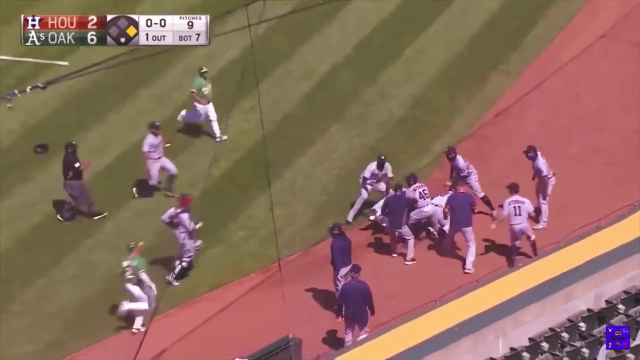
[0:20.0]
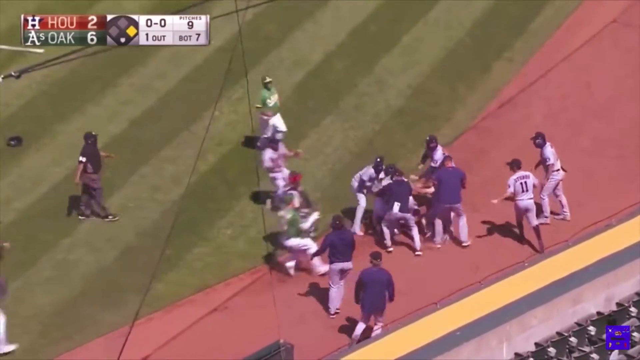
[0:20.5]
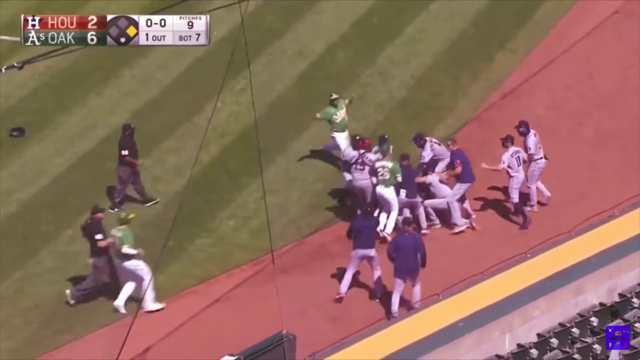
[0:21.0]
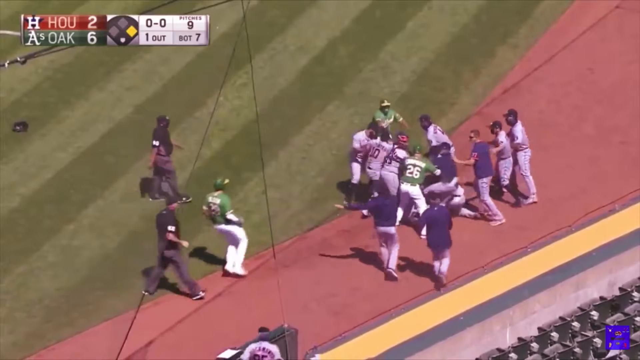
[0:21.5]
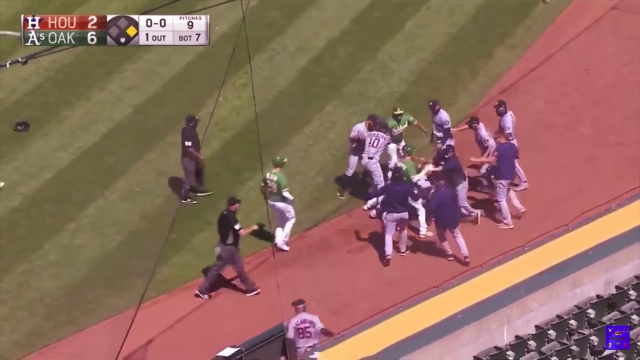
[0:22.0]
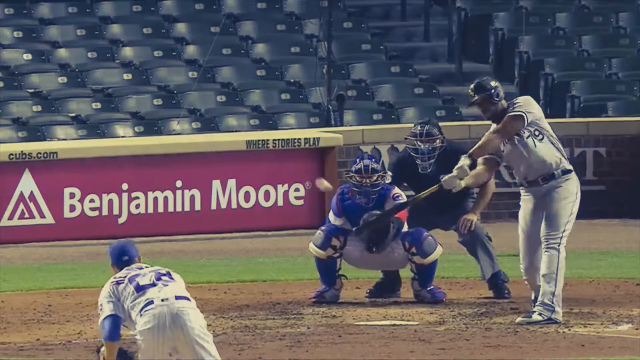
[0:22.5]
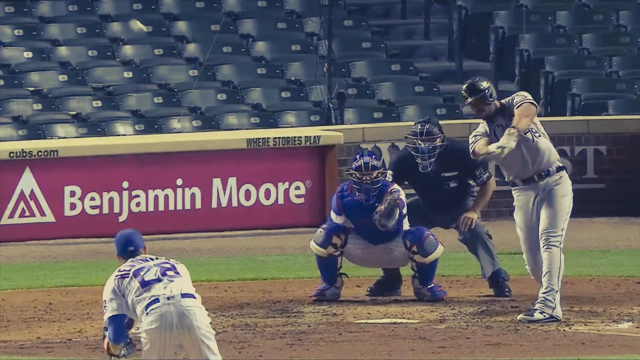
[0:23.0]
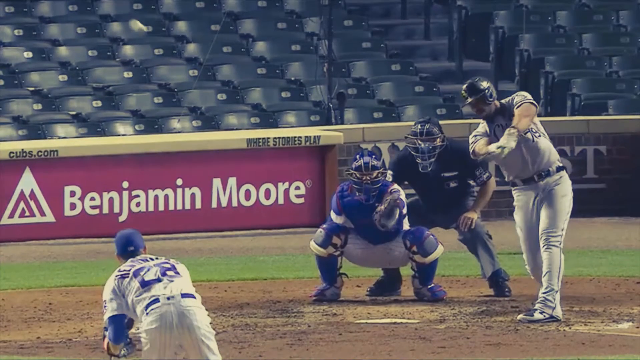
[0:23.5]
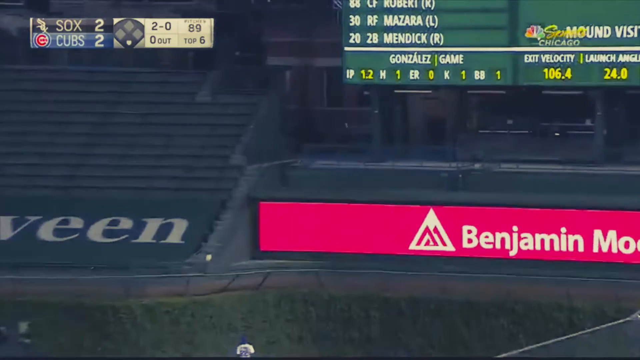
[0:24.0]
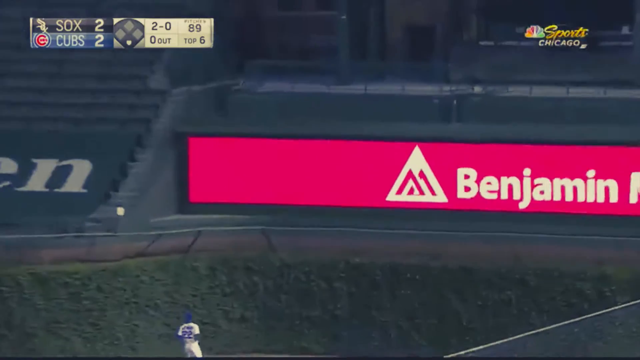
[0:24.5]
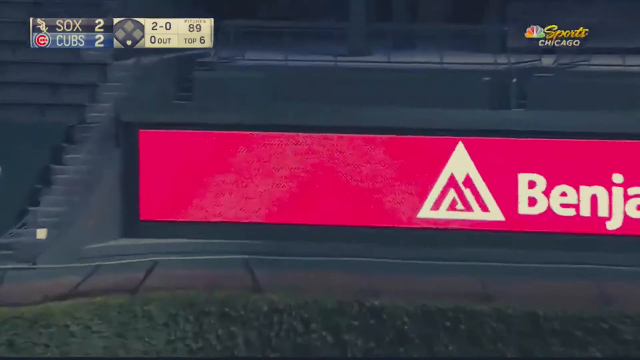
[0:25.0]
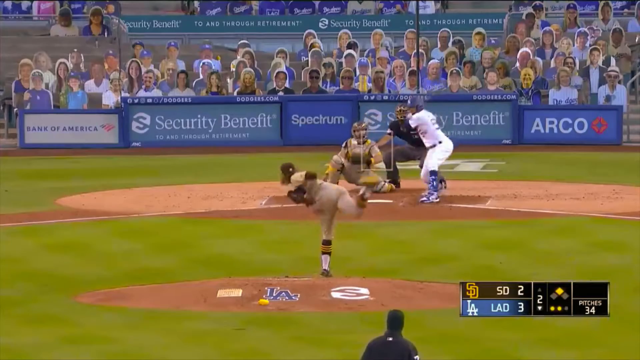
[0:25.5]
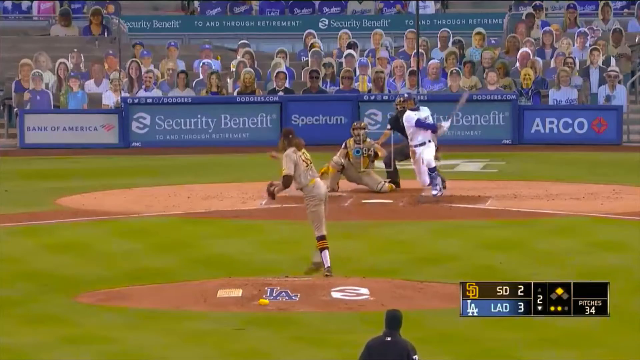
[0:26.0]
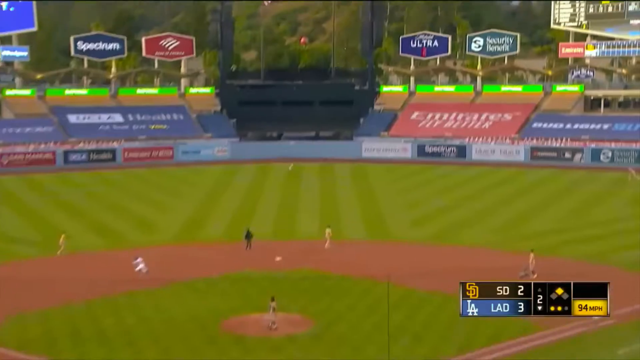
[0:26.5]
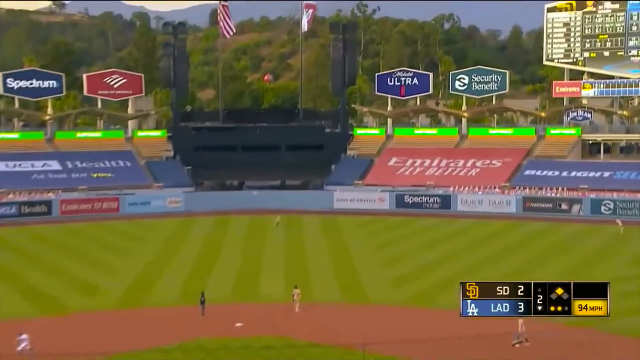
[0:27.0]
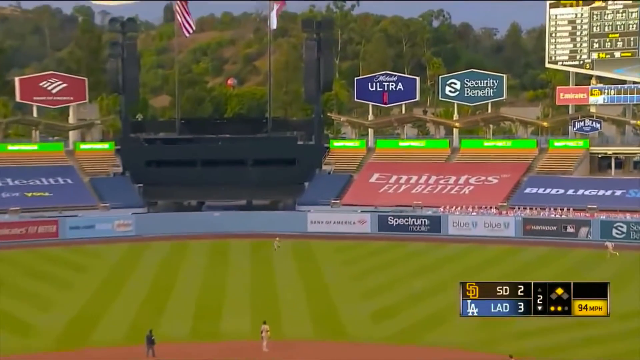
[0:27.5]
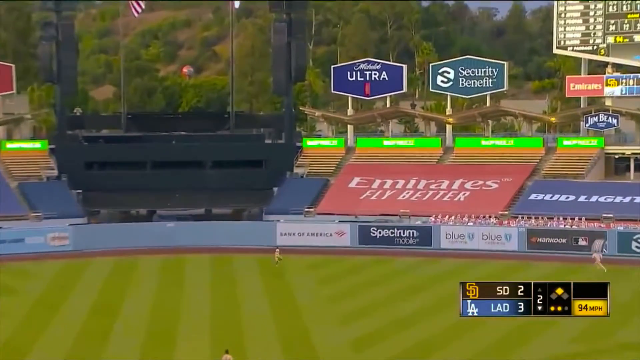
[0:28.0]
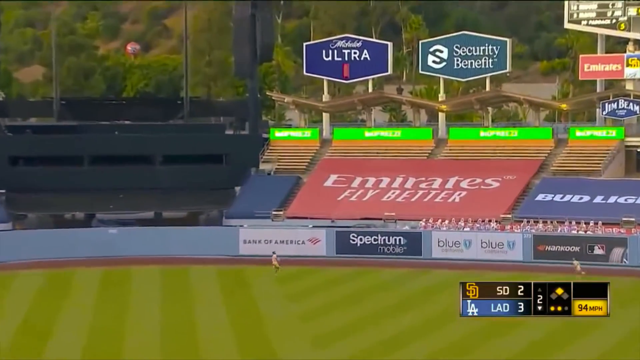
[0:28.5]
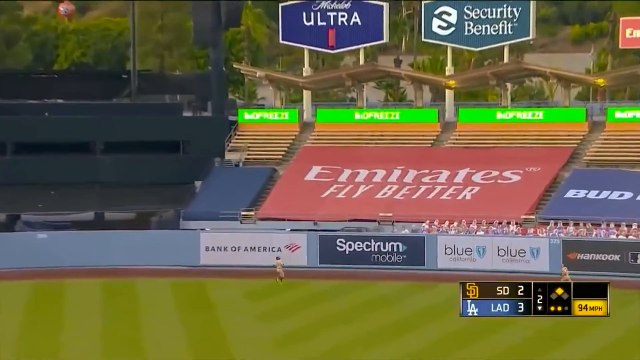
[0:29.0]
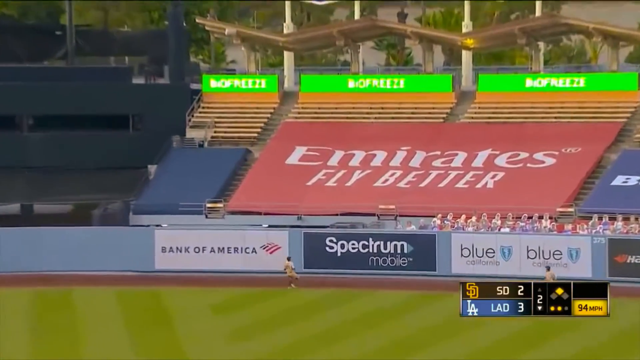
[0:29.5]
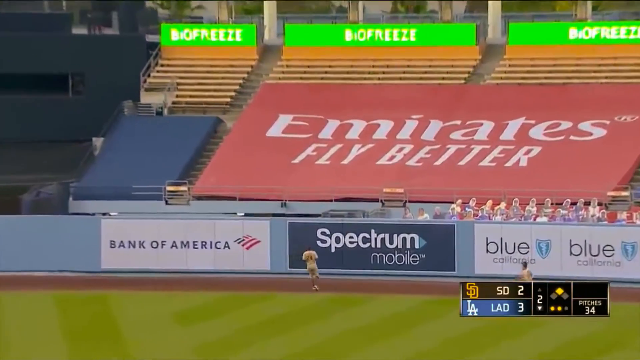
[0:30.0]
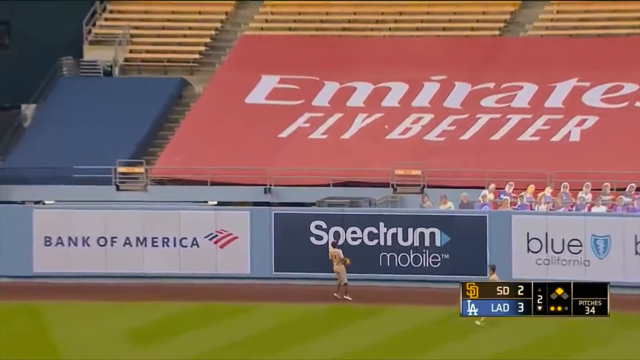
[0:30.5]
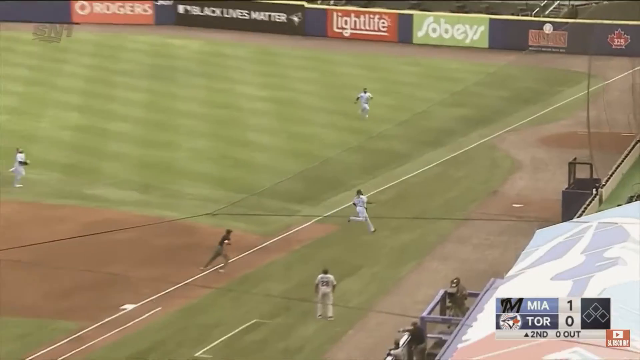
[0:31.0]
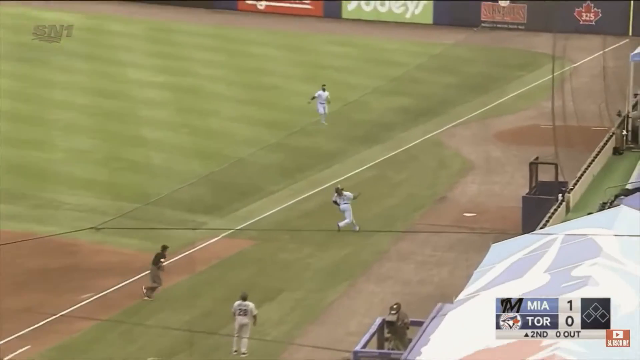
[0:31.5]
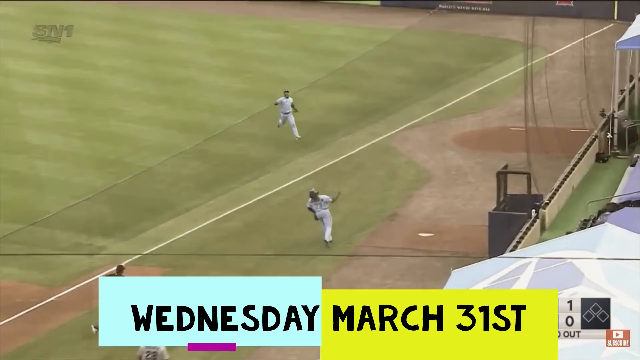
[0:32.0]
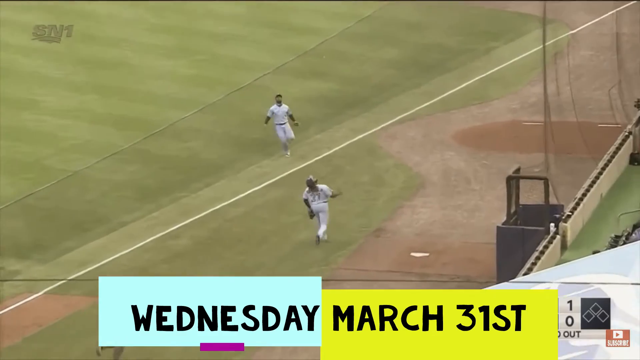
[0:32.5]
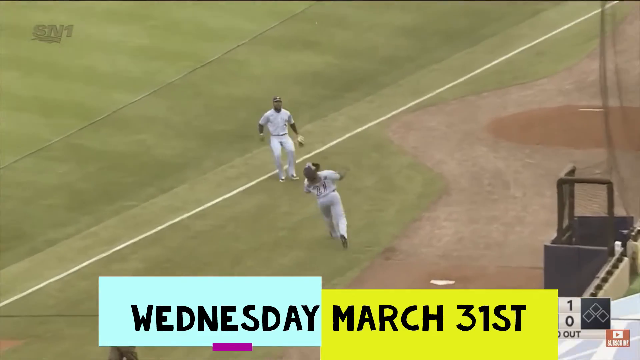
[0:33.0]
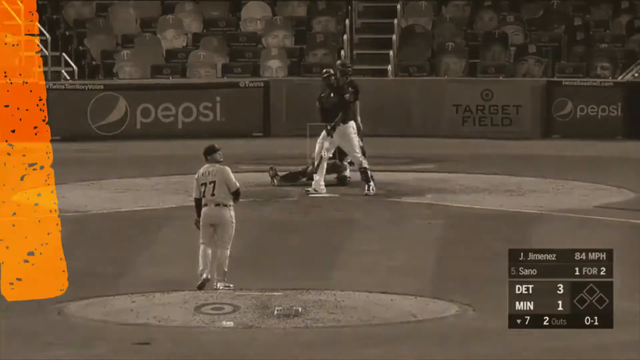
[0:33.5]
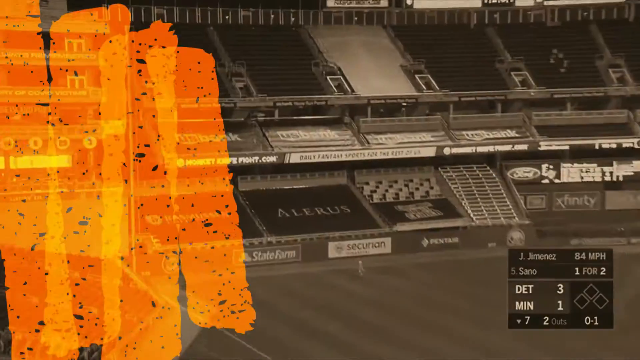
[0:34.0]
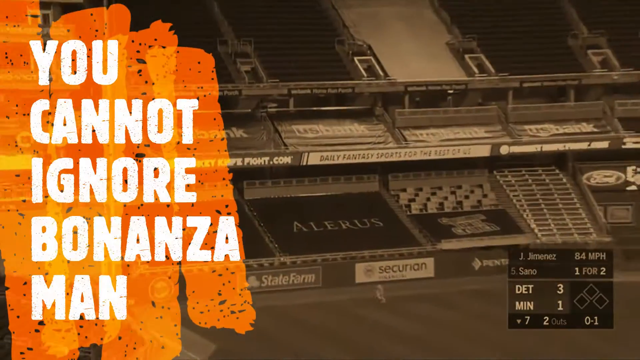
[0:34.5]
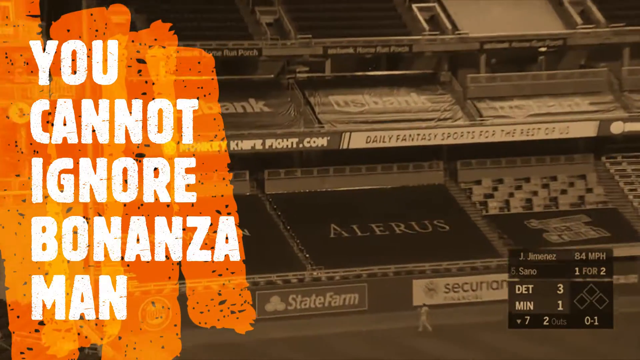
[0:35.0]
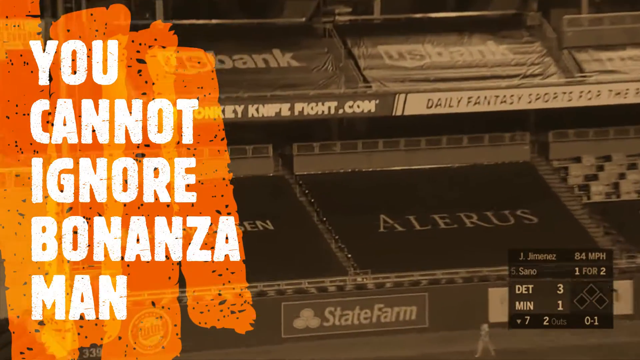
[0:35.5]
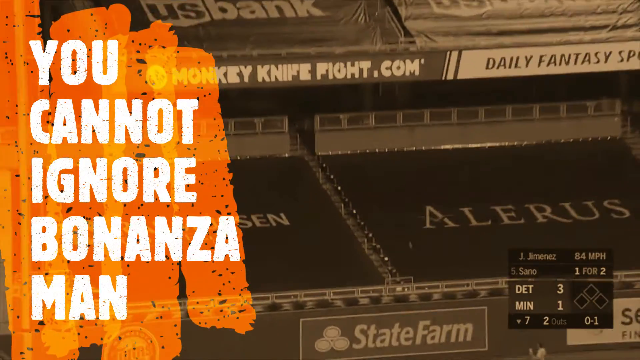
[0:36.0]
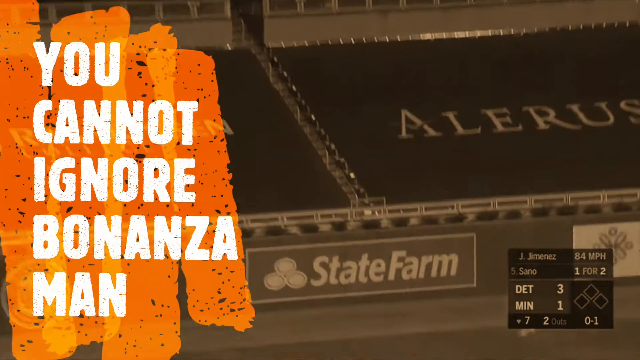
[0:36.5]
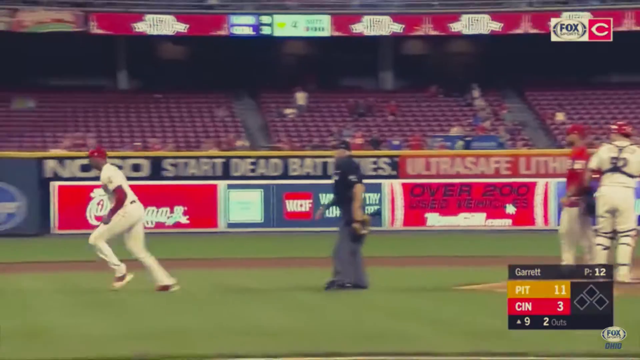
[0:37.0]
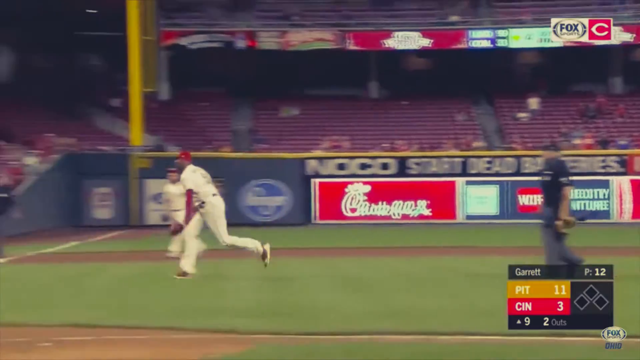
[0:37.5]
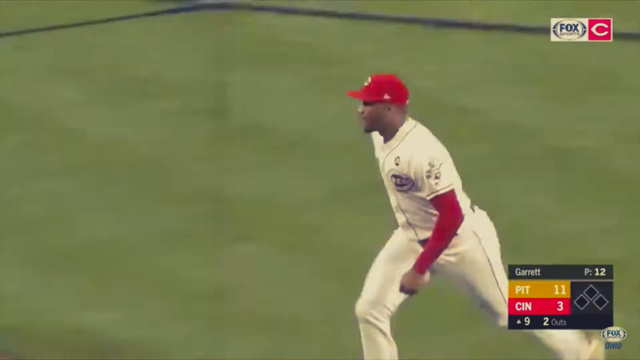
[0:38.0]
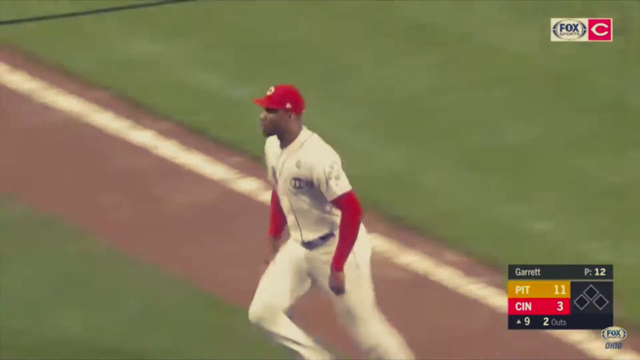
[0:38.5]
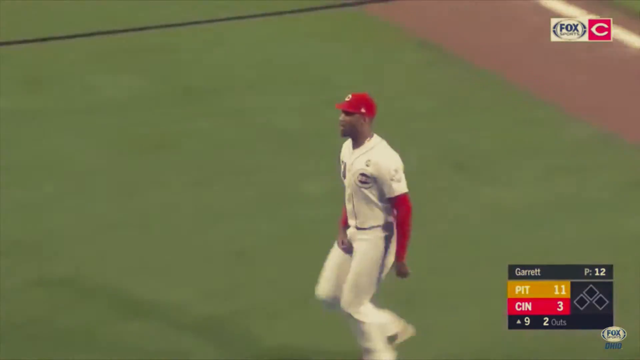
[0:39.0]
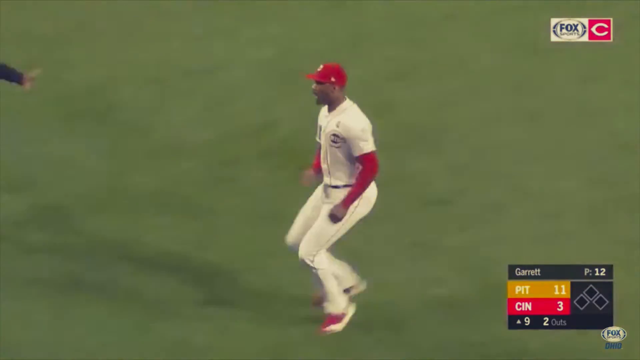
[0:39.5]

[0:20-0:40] A fight breaks out when the game stops in the stadium. The score is 2-6. Some people come rushing in to stop the fight, while others join in and make things worse instead of stopping it. Some players wear green and white, while others wear white and blue. A player hits the ball with a bat and it goes very far; when players run toward the ball, they start fighting. Two different baseball games are shown: the first is played late in the day and has no viewers, while the other is played early with the sun out and has supporters.